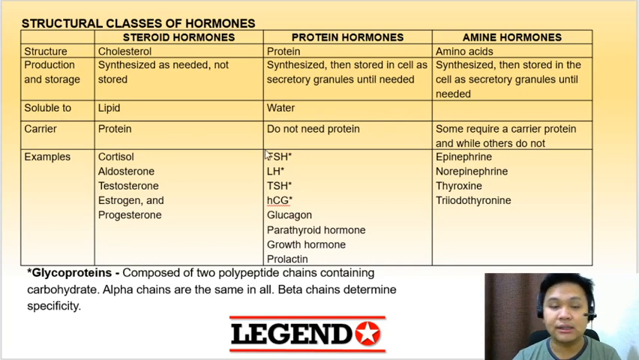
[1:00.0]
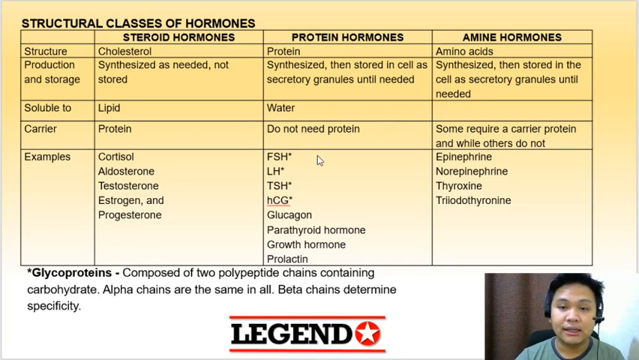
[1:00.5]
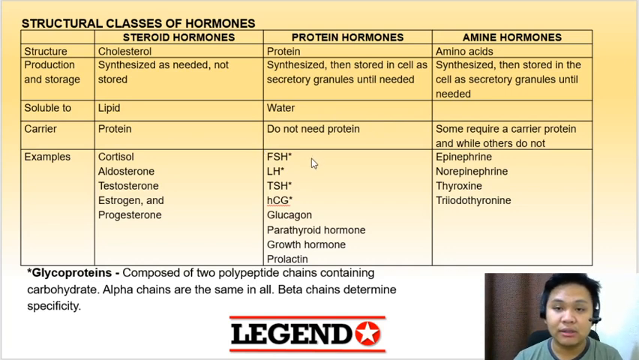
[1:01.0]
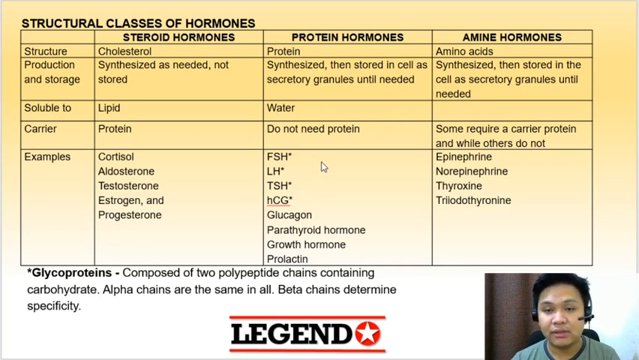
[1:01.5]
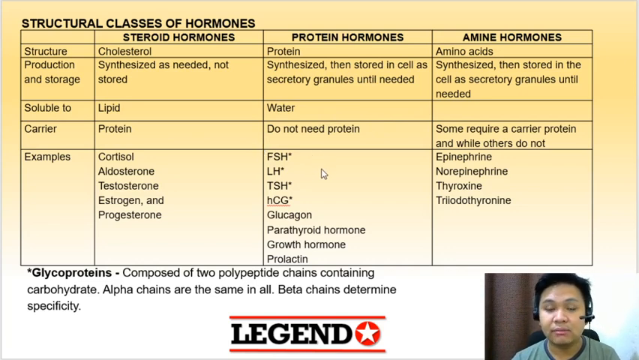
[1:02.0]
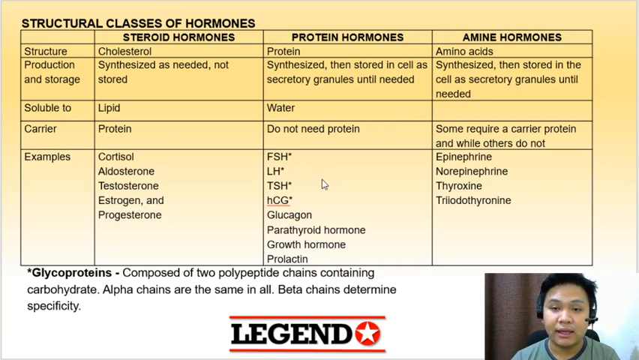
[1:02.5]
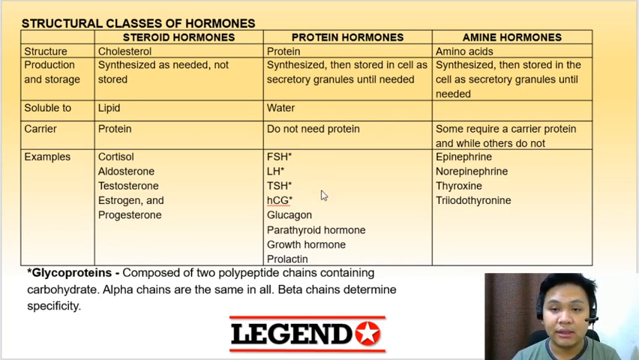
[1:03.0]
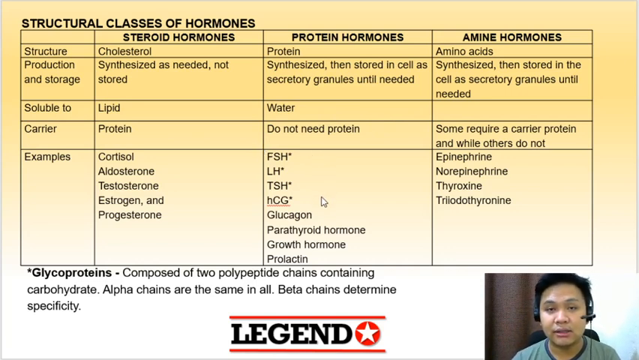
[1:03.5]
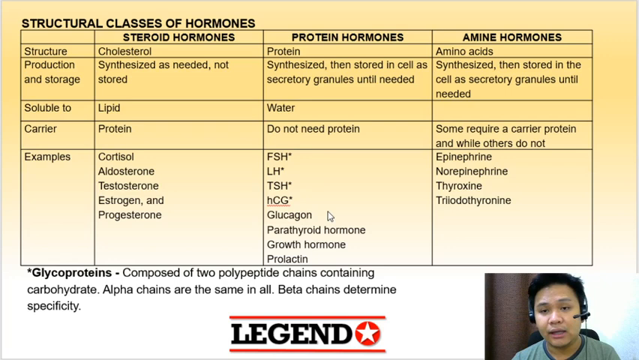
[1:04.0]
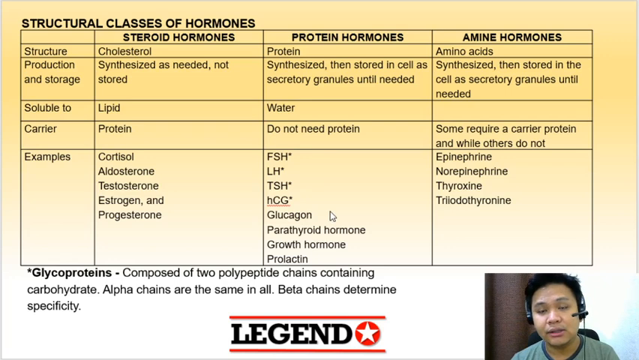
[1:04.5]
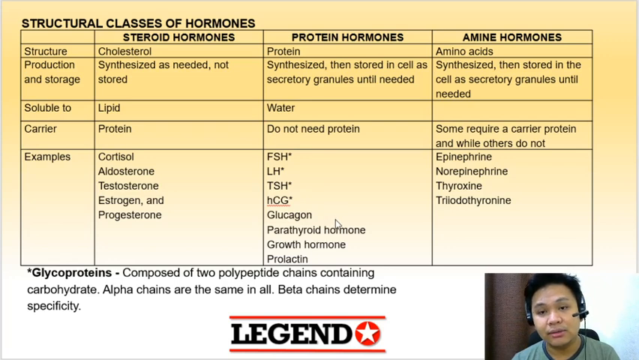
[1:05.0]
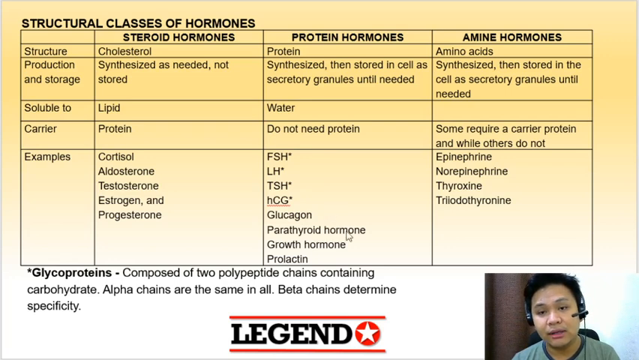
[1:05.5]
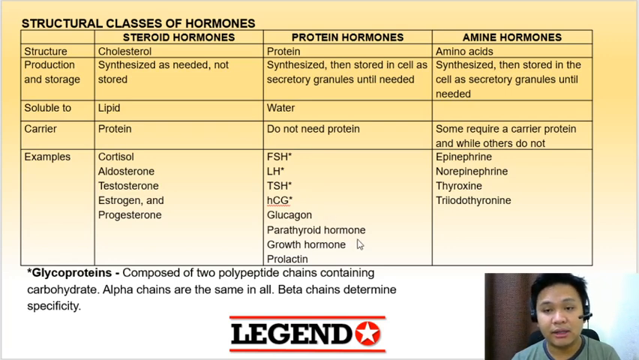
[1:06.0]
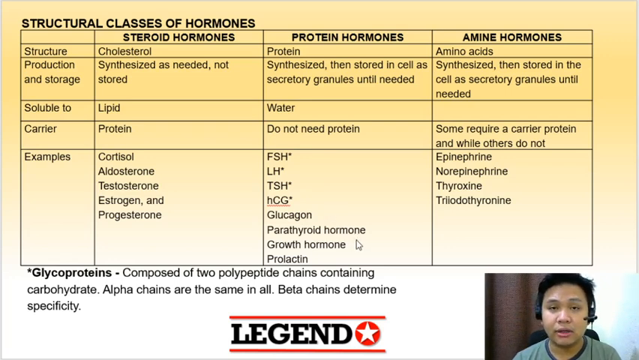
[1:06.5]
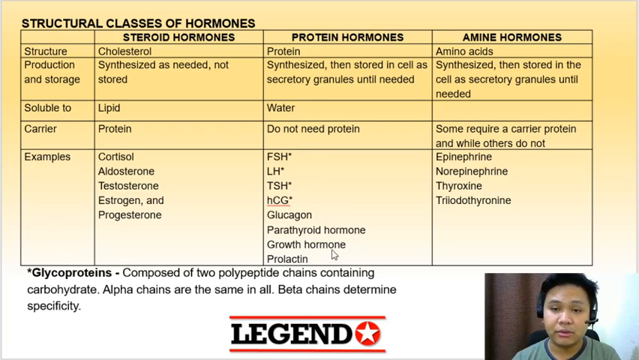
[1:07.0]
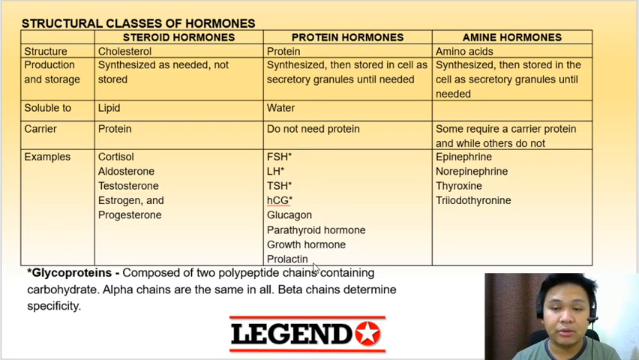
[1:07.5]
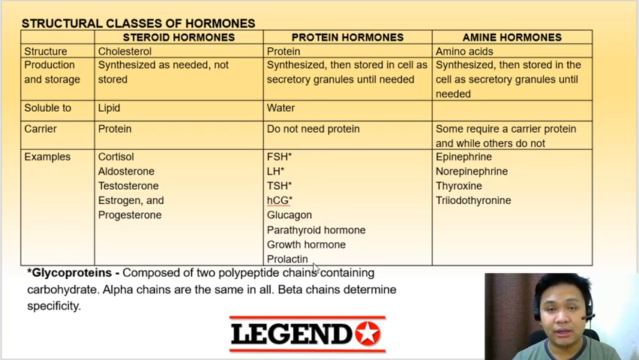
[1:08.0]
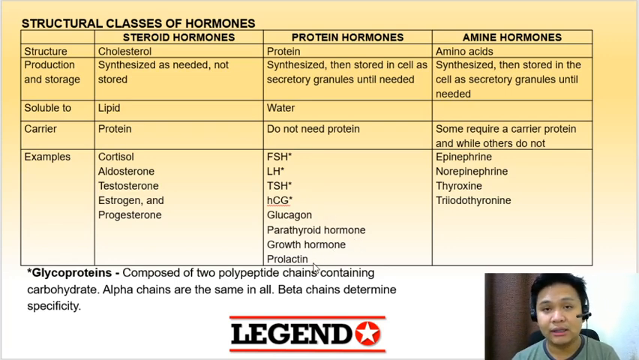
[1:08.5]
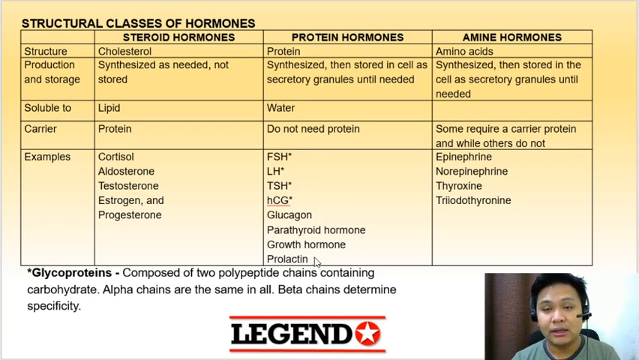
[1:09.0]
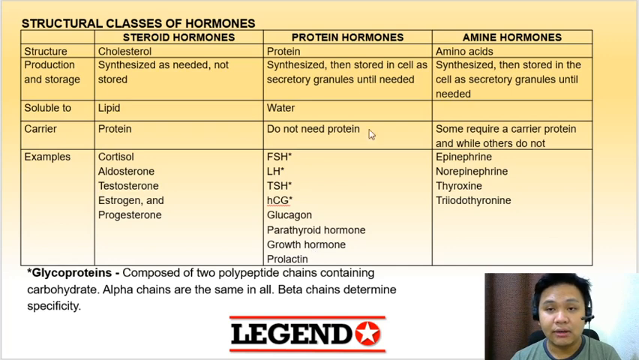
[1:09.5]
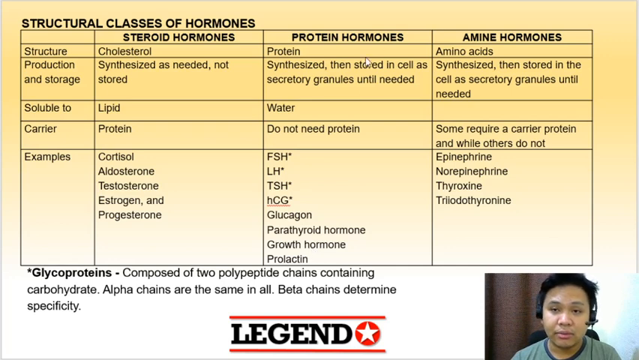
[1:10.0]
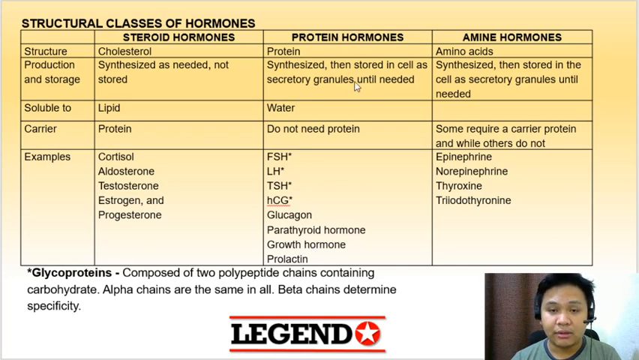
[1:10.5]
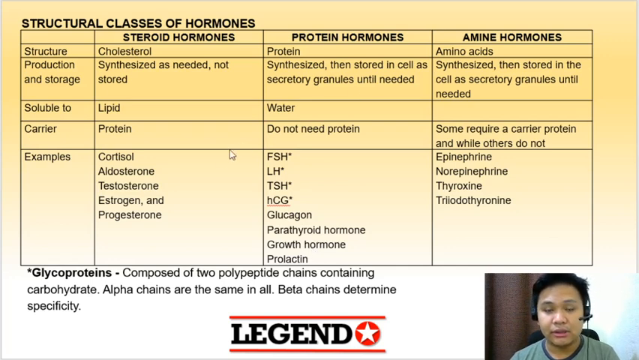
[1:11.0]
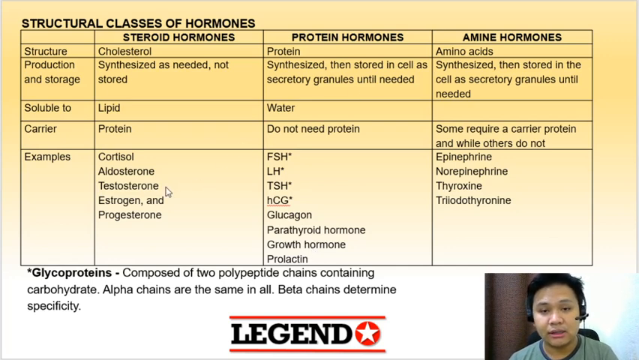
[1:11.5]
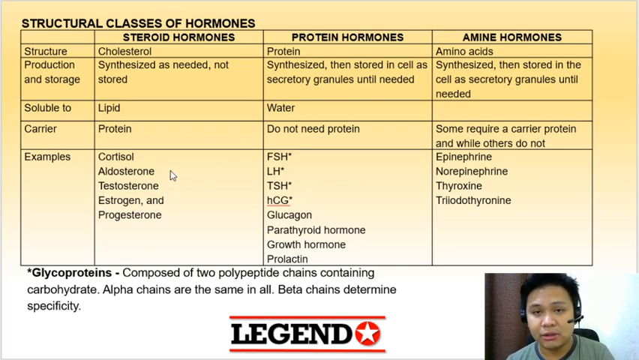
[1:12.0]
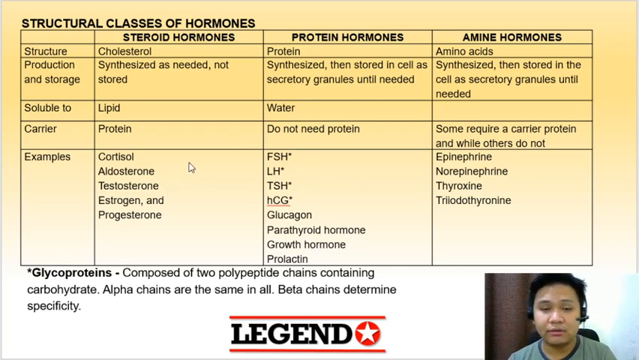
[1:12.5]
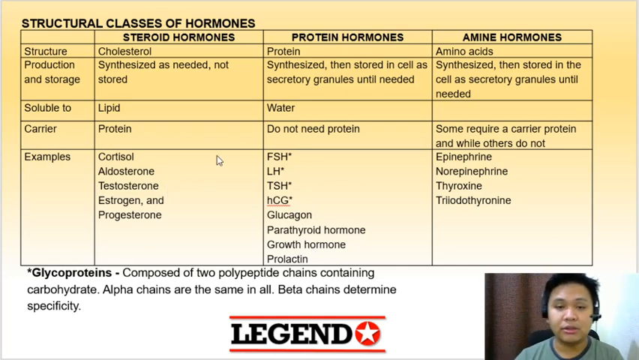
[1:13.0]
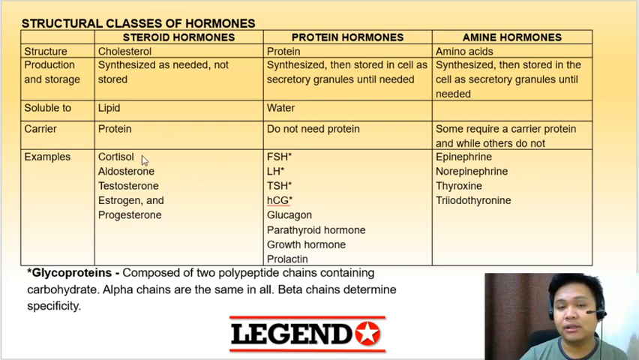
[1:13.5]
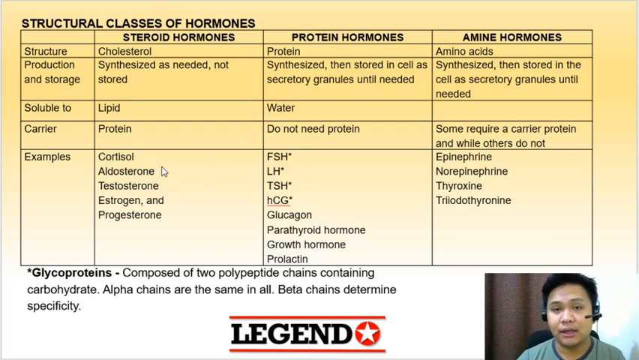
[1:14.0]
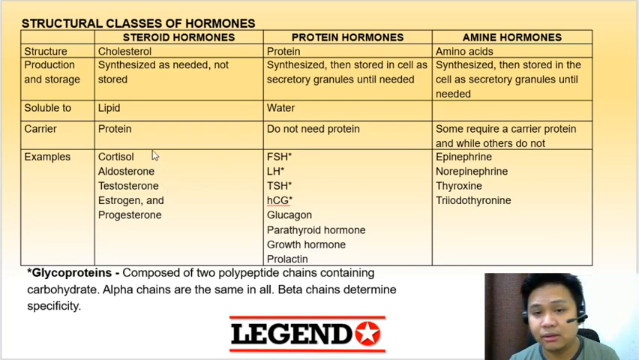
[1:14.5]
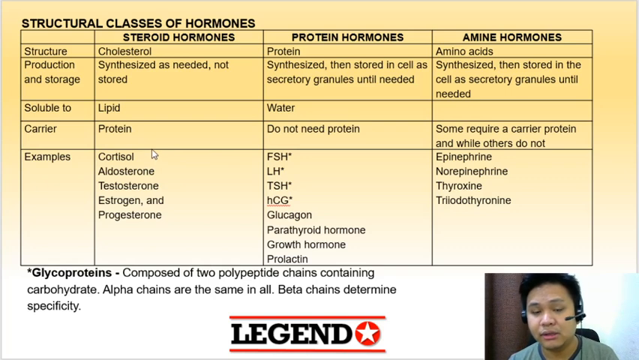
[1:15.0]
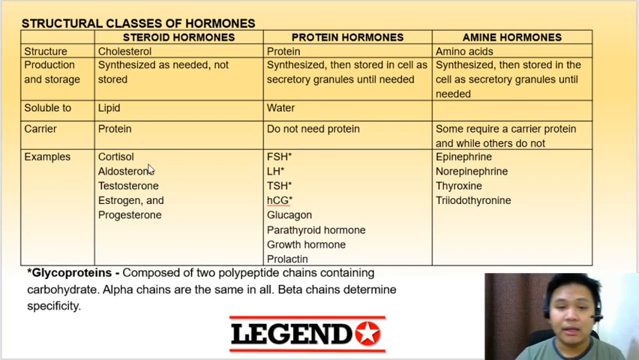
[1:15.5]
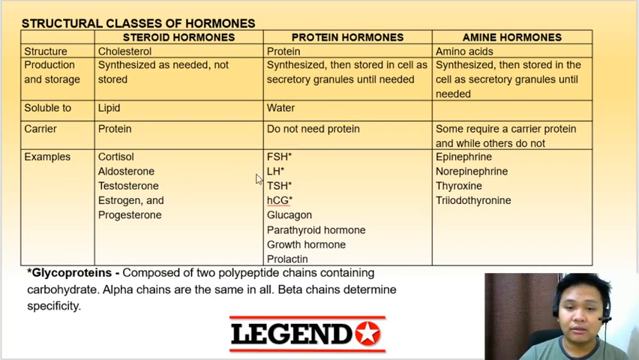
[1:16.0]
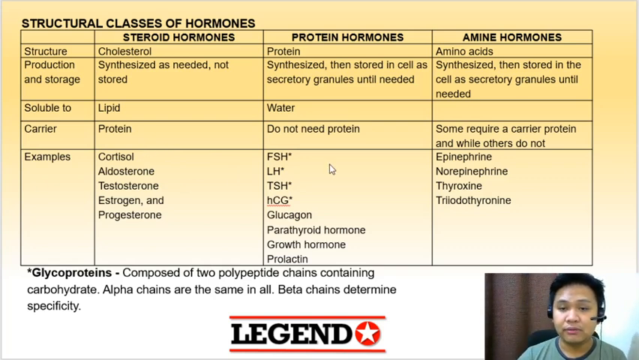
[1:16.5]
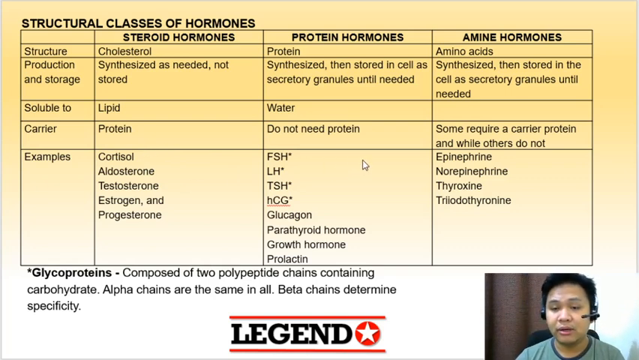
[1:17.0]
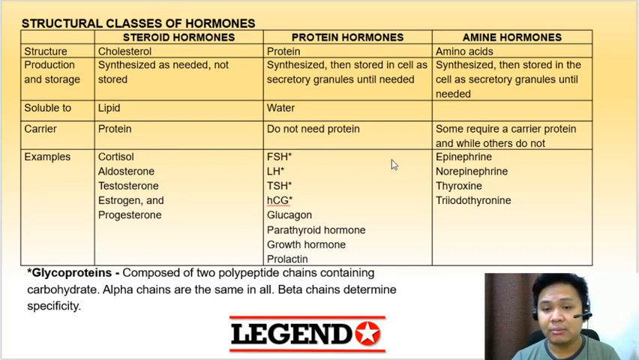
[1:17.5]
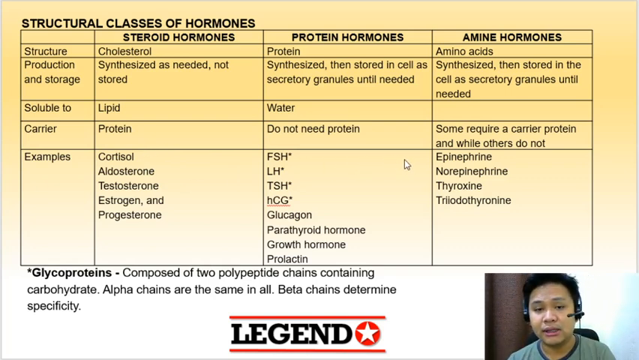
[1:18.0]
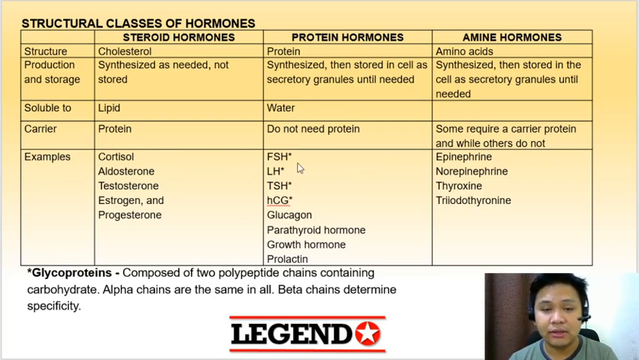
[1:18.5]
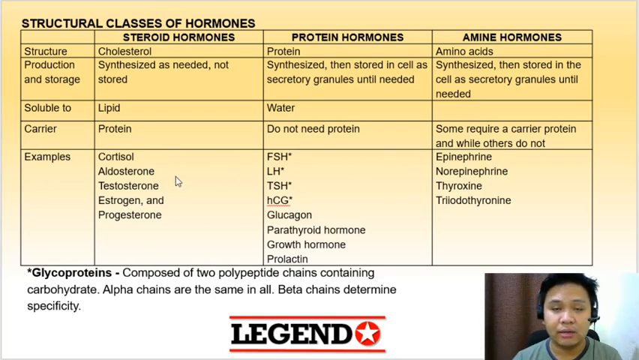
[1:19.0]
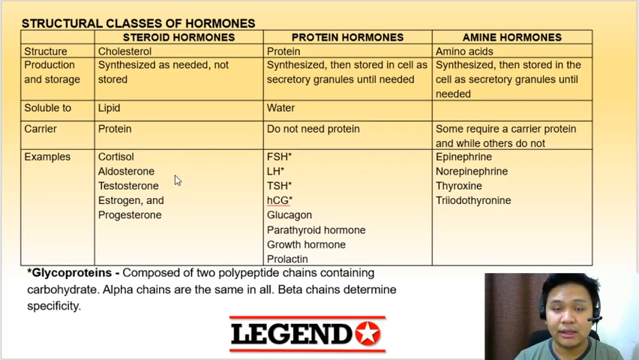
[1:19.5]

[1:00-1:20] A table is written in black words with black lines on a faded orange and purple background that is quite transparent. Its heading is "structural classes of hormones", and it covers steroid hormones, protein hormones and amine hormones, giving the production and storage, solubility, carrier and examples of each. A person in a box at the bottom right appears to be speaking live, perhaps explaining the different hormones on the screen. Underneath the table is the asterisked word "glycoproteins" with an explanation: composed of two polypeptide chains containing carbohydrate, alpha chains are the same in all, and beta chains determine specificity.